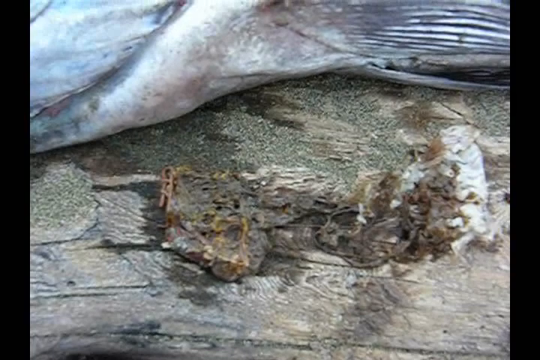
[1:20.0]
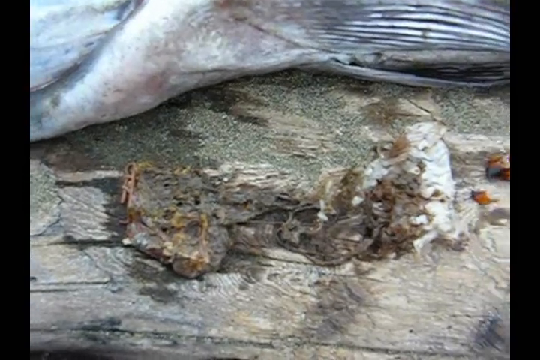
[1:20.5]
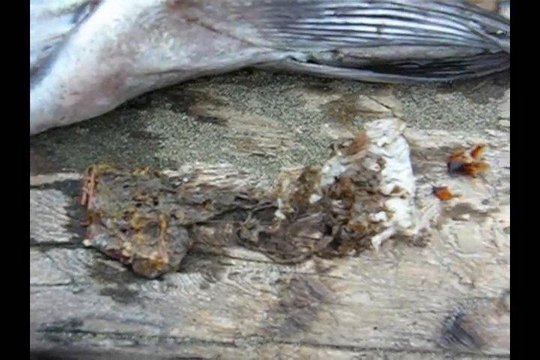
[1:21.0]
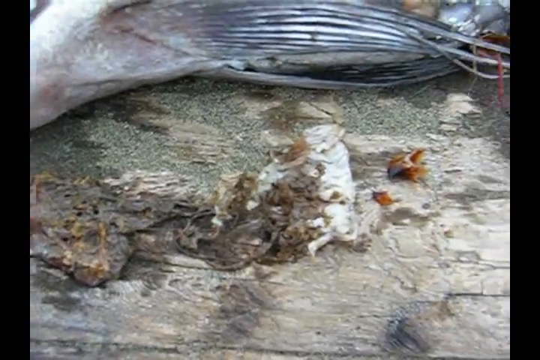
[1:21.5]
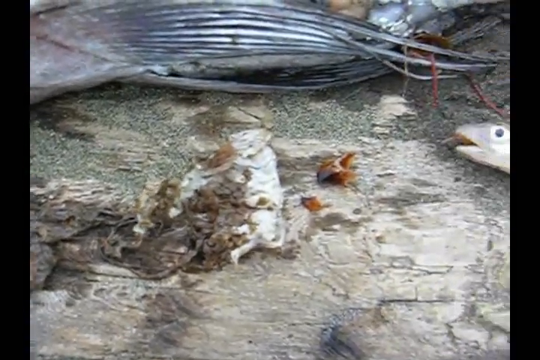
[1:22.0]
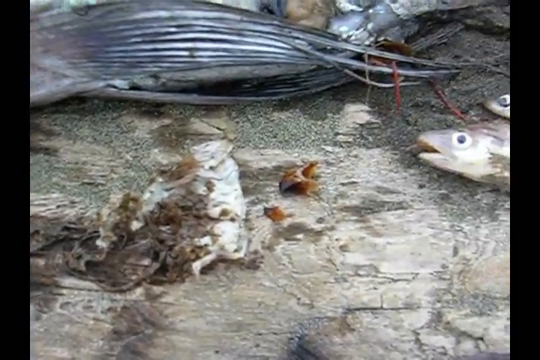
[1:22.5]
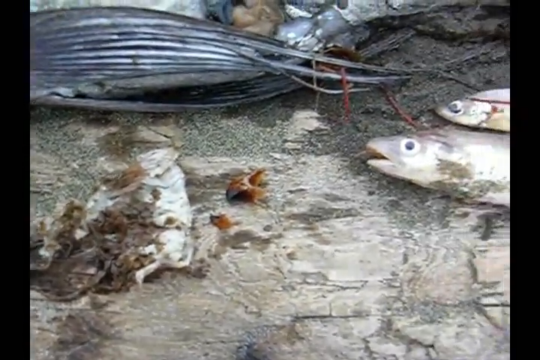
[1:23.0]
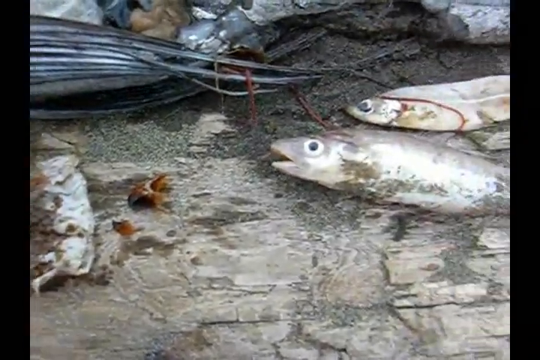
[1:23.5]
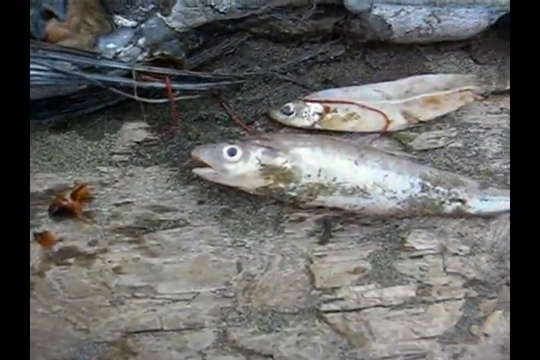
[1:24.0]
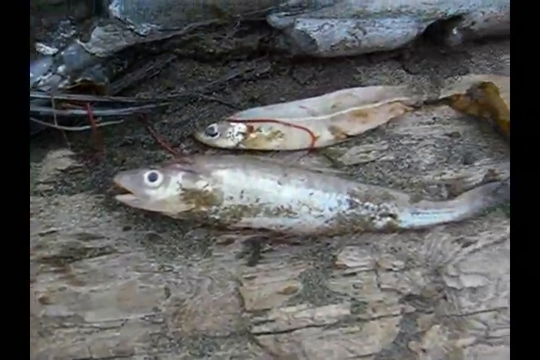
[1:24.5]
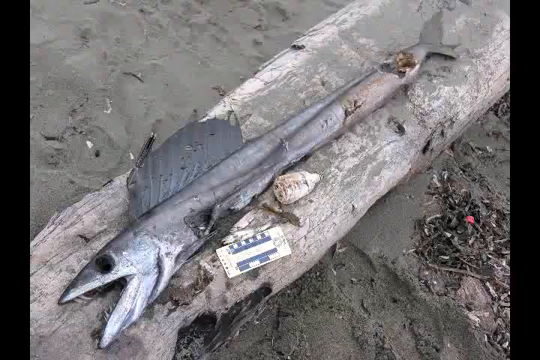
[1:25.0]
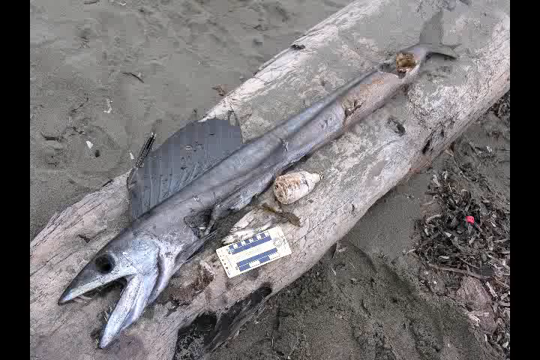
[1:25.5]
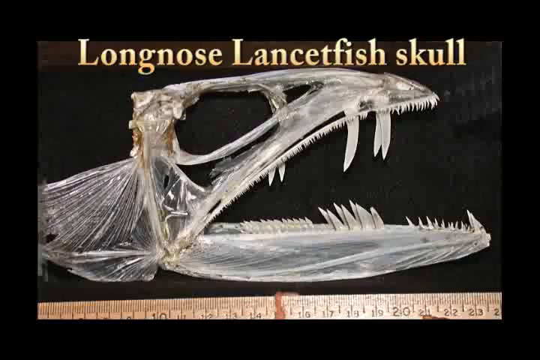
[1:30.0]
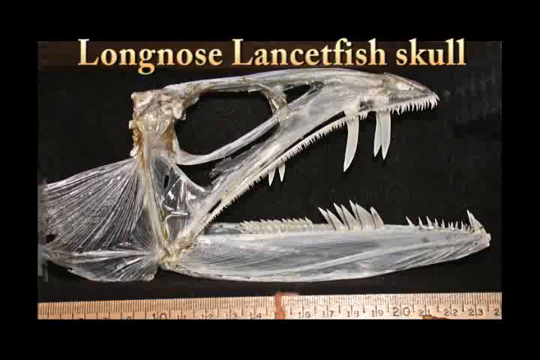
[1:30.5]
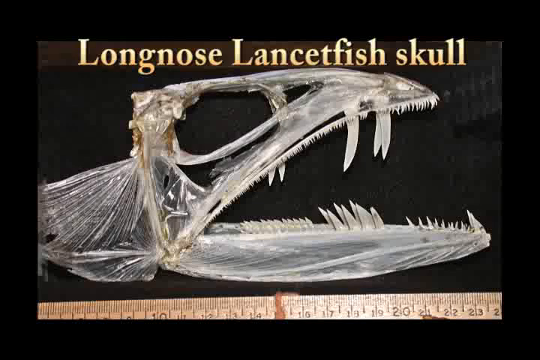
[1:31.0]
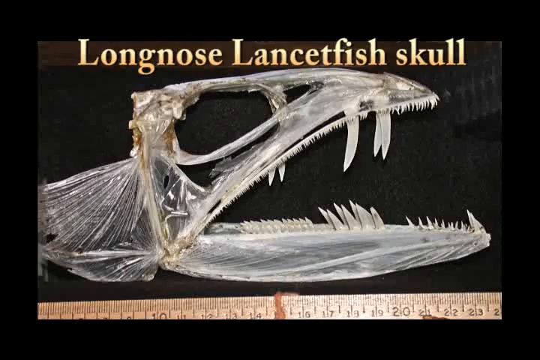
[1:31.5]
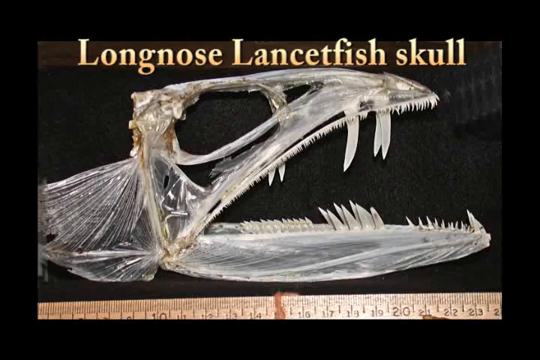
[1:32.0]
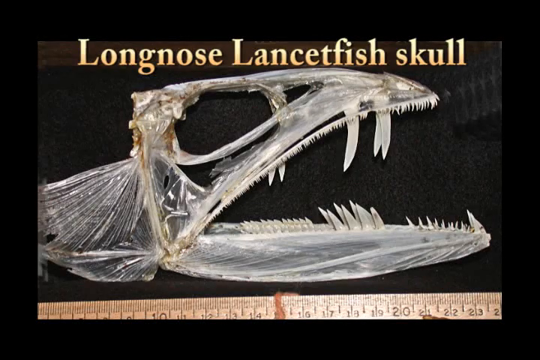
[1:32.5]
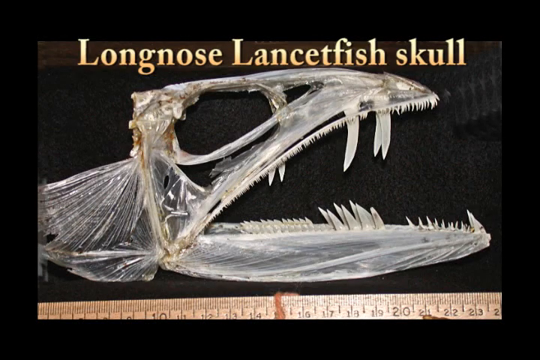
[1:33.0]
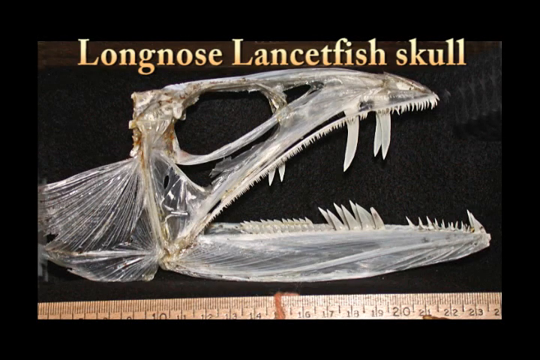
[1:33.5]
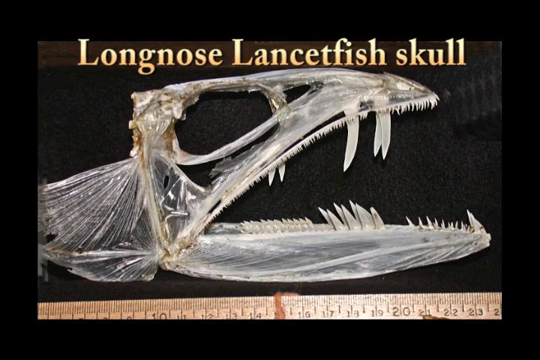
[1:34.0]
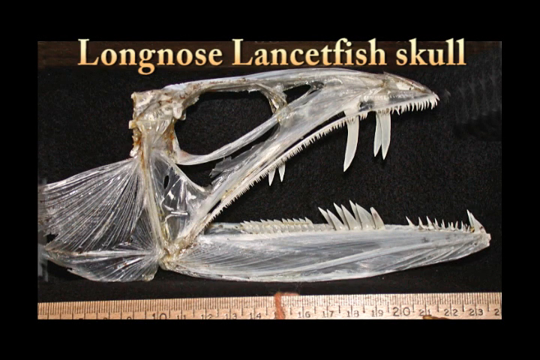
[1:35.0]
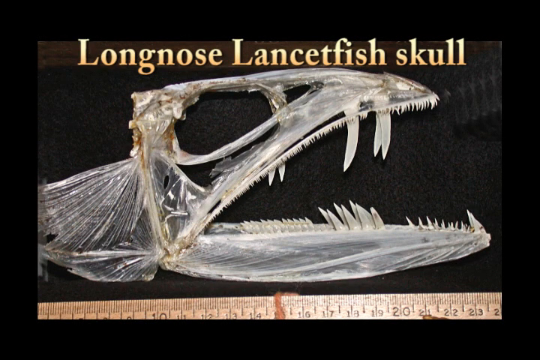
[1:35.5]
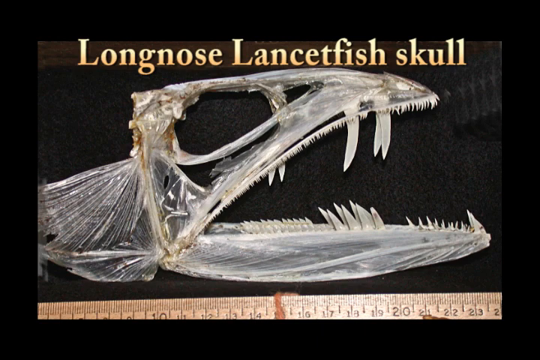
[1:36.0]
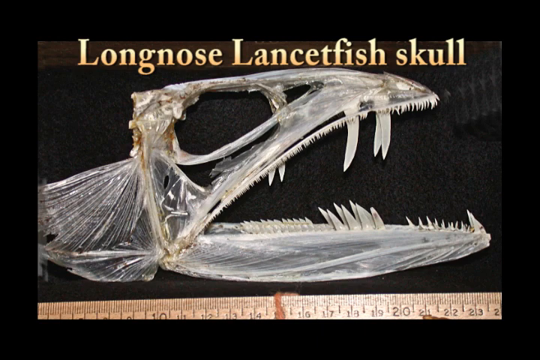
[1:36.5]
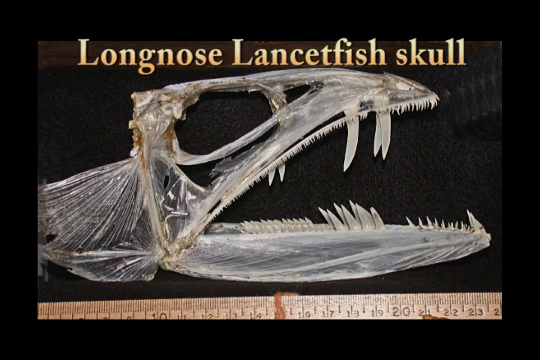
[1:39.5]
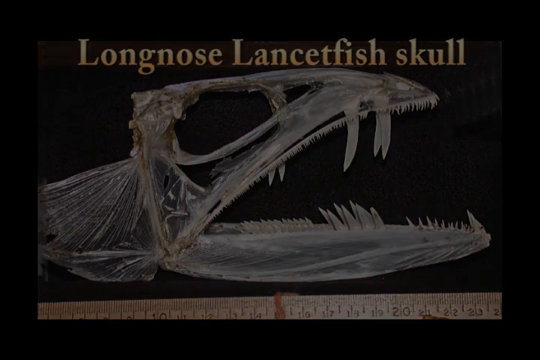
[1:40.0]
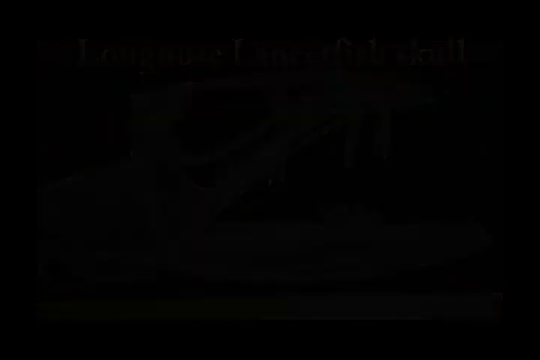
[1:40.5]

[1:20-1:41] The shot is slightly confusing, showing a lot of unidentified material that looks to be on a wooden log. It could be moss, but it is unclear; it is brown and seems to be covered in water. On the far right is a white part that seems to have many different parts, unclear due to the poor video quality. On top of it is what seems to be some sort of fish-like creature, not entirely in the frame. The camera pans across the different parts and then pans to the right to two deceased small fish. They are silver with wide open eyes and face to the left. One of them has a red string-like substance on it, perhaps an artery or fishing line, but it is unclear. The camera then pans back to a wide shot of a large deceased fish with no eyes, very pointy teeth, and many injuries across its body. The fish is gray with some blue hues, is covered in sand, and is laid across a log on top of a beach. In the background are a measuring ruler and a white plastic bottle.